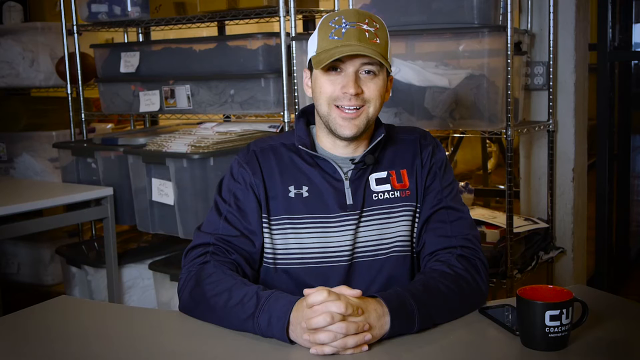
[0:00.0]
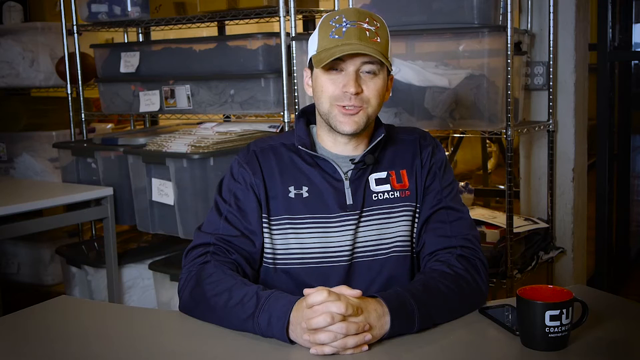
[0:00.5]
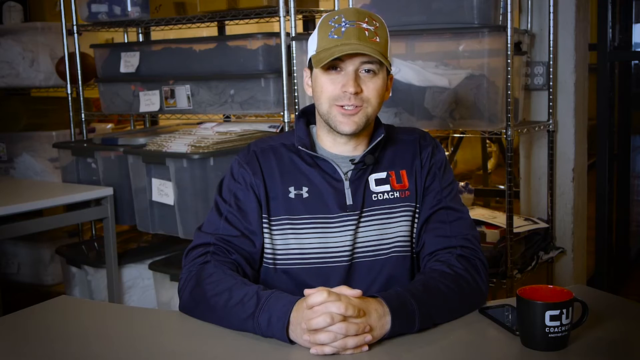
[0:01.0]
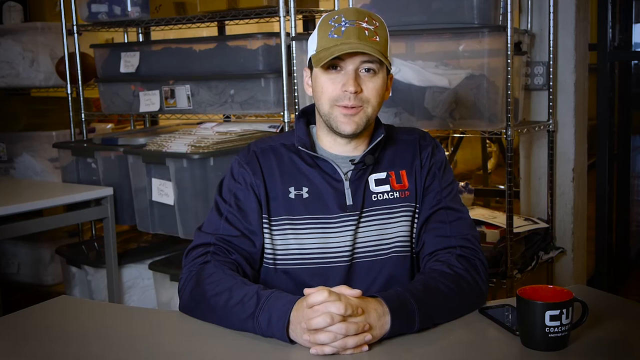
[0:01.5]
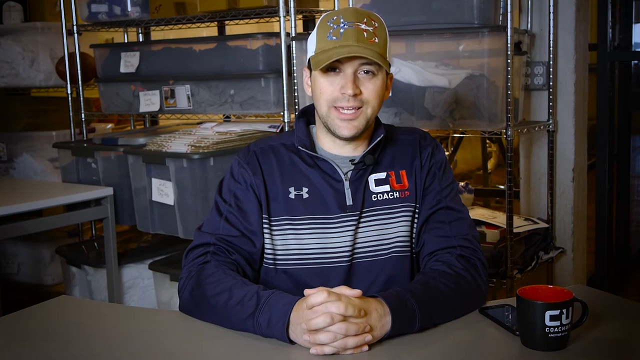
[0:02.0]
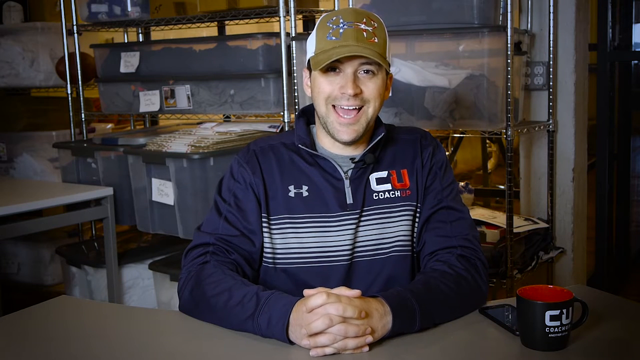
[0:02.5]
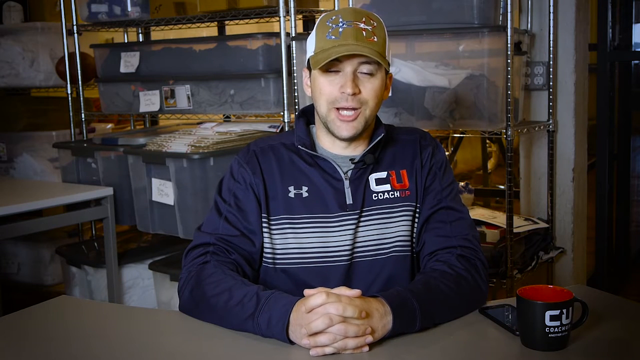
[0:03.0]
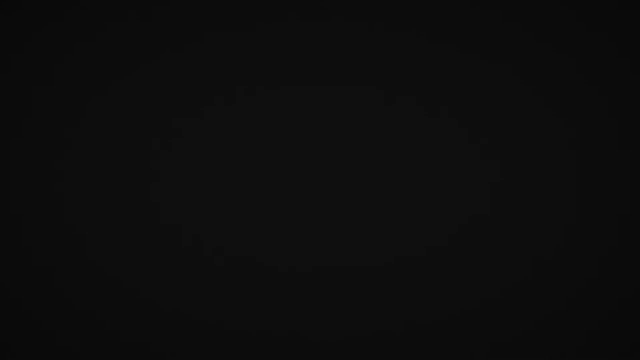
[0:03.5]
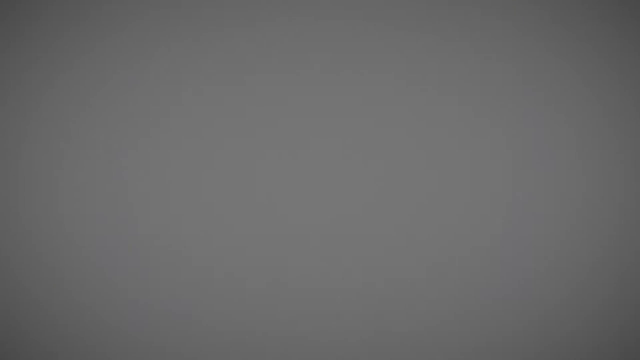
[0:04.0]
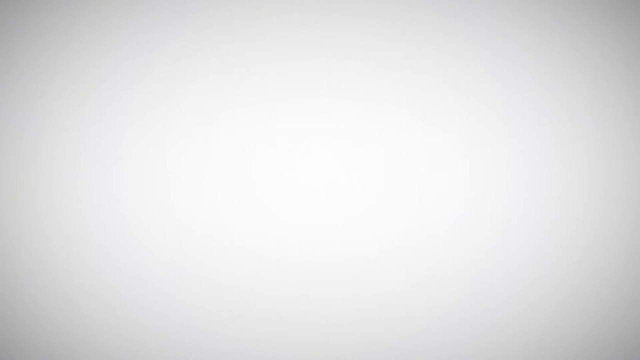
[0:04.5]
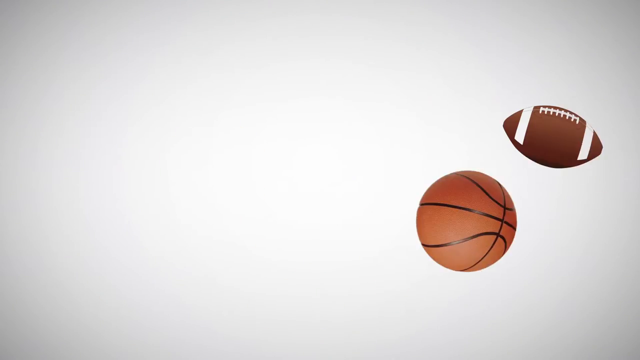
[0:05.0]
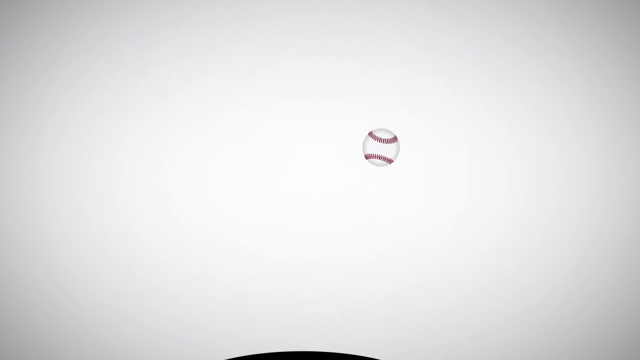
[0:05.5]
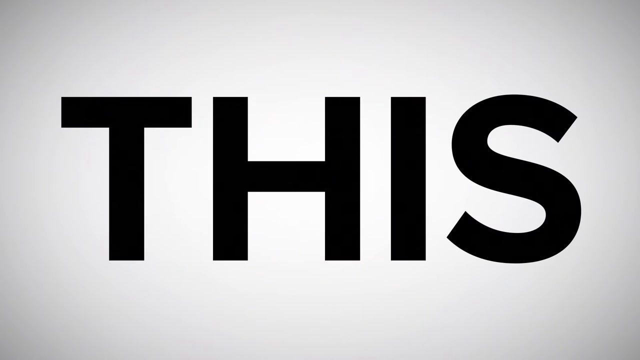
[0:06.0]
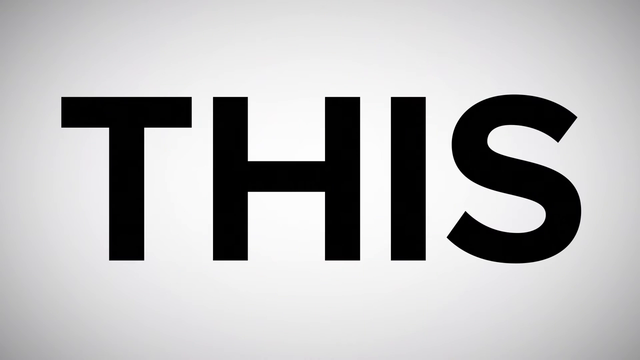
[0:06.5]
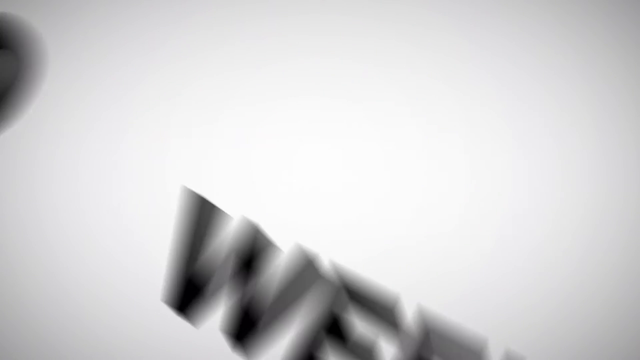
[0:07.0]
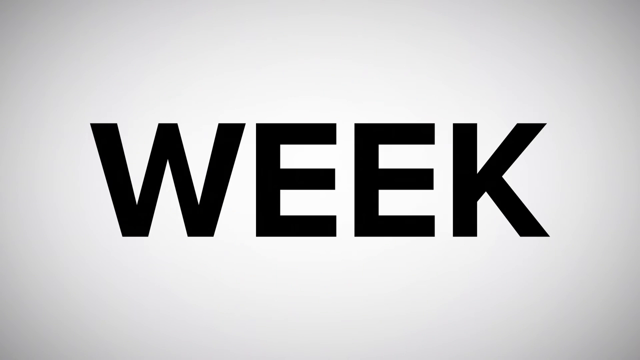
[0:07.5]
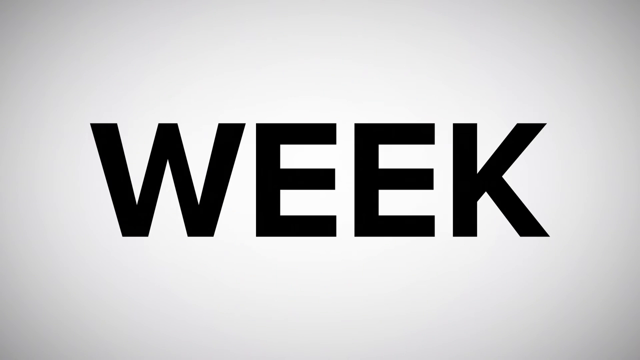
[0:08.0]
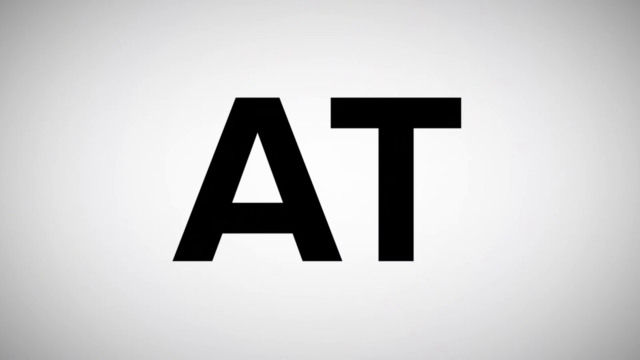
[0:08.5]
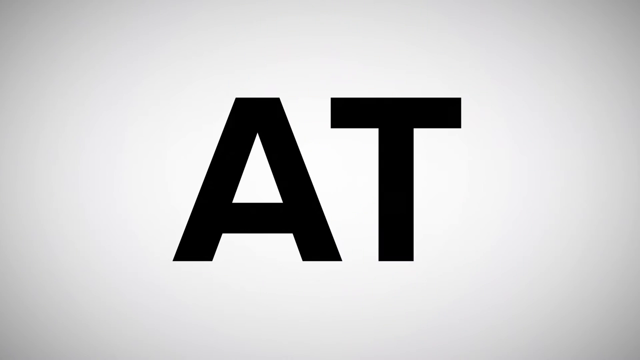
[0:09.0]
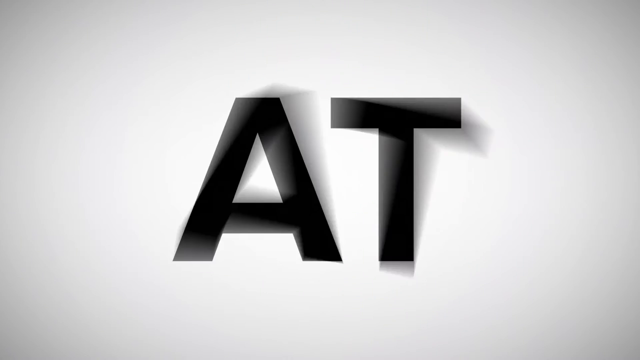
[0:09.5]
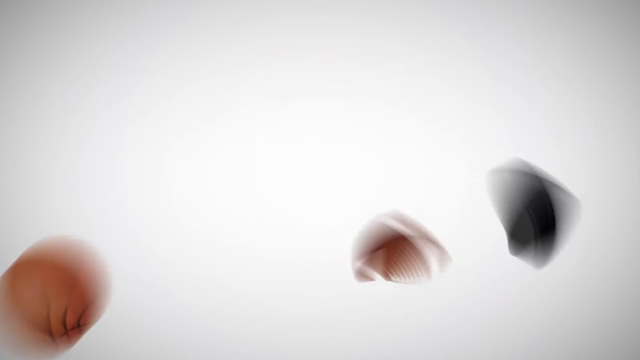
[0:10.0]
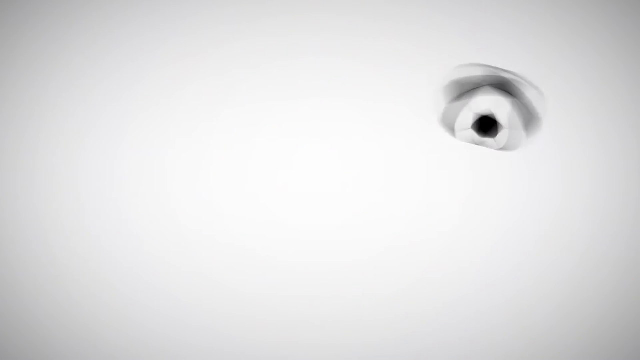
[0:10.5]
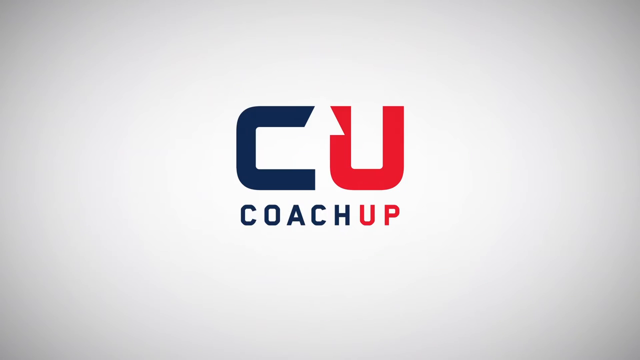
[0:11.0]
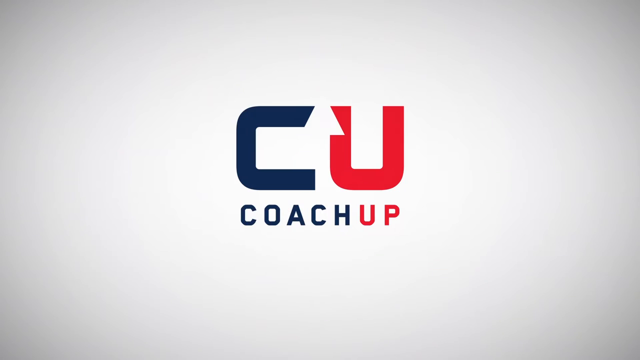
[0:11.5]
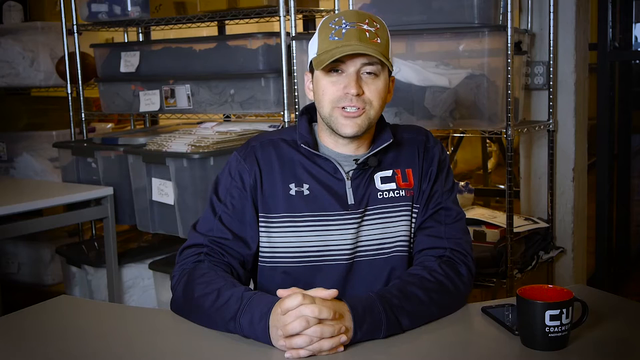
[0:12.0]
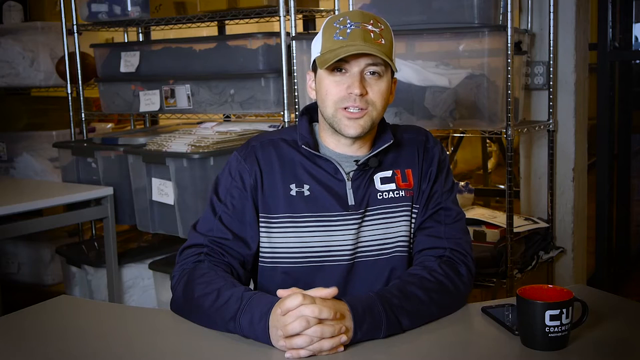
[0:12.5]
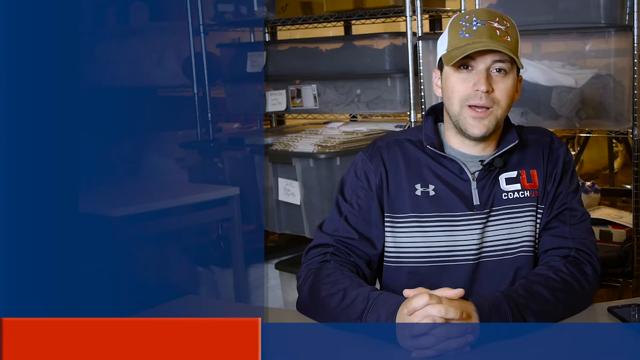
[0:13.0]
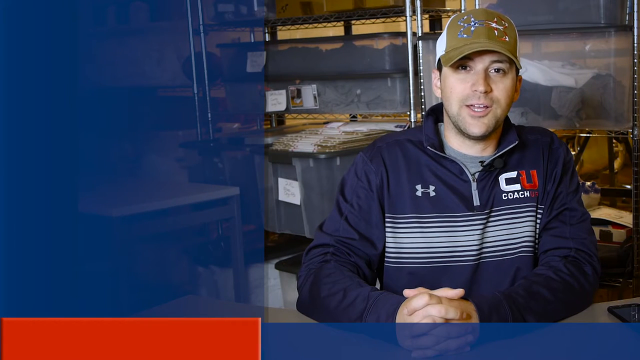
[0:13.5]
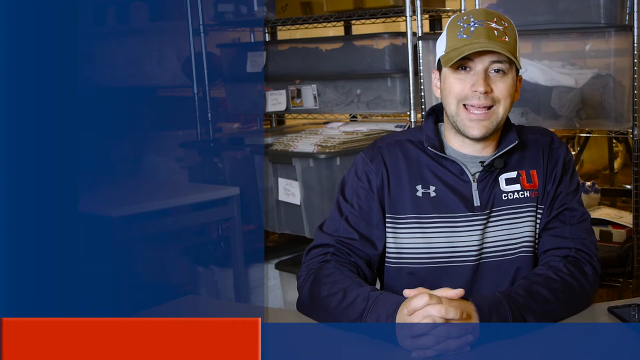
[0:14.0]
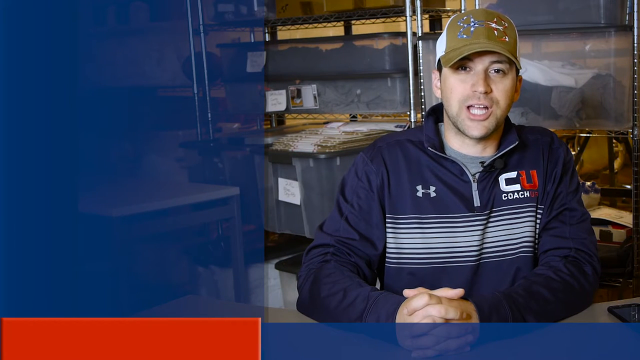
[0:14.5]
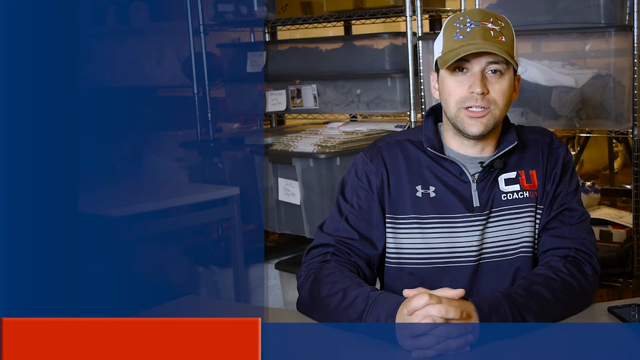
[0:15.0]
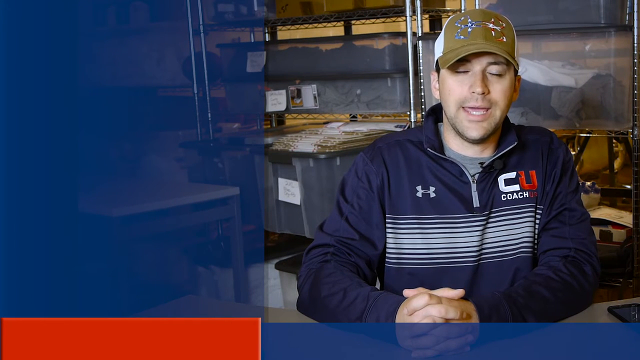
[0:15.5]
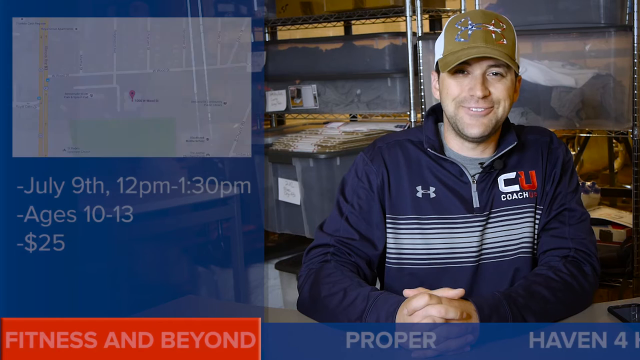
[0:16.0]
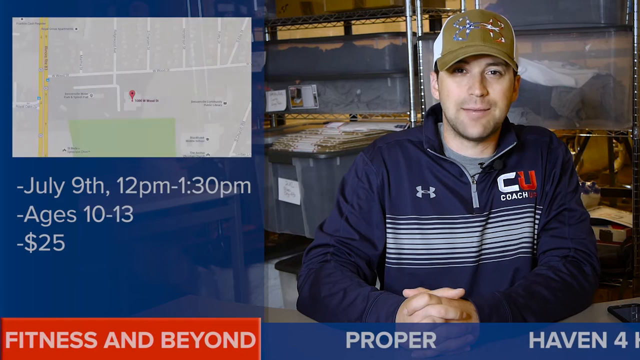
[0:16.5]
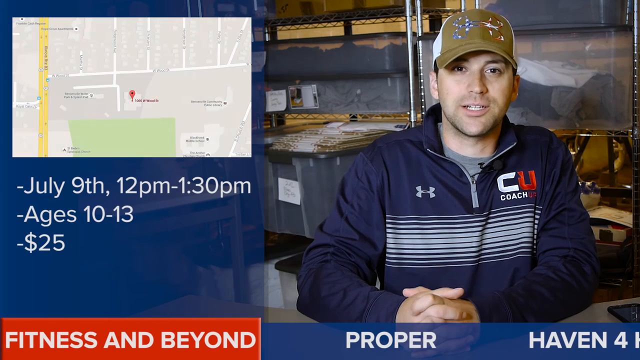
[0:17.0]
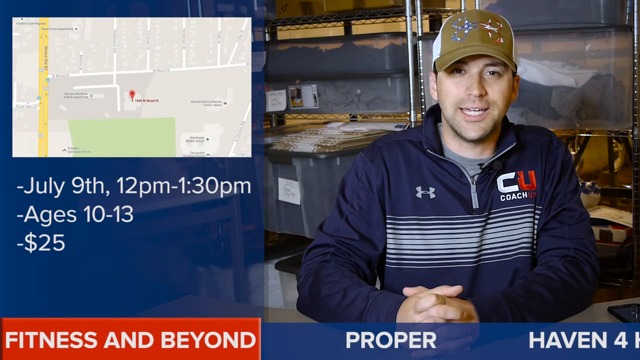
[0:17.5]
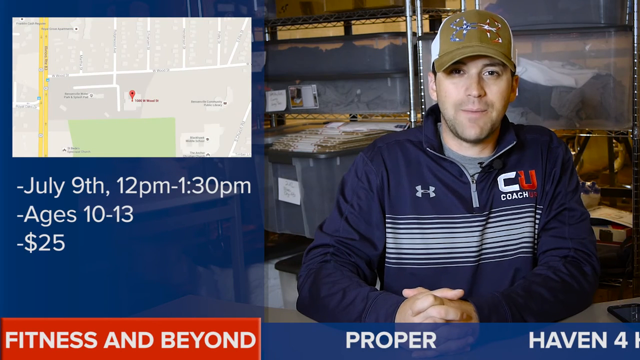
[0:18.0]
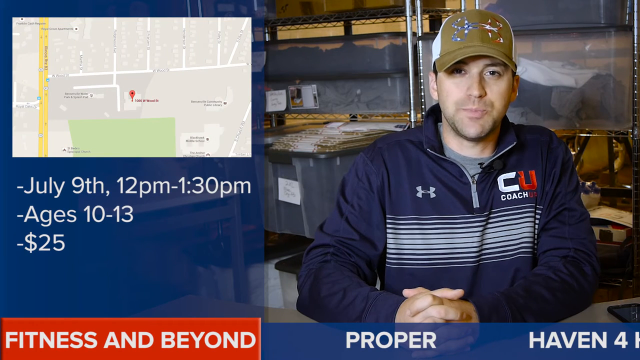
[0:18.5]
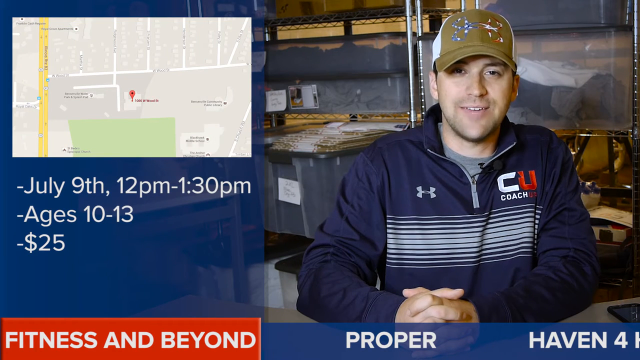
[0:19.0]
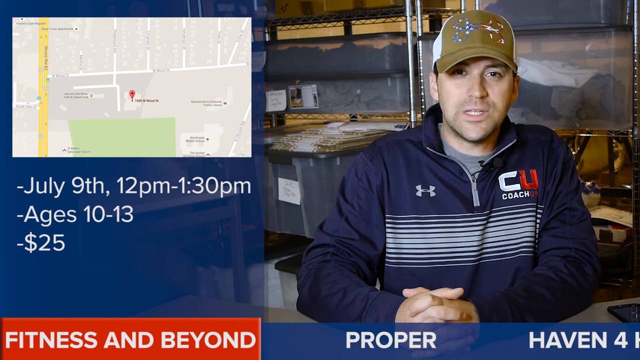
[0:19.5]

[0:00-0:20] A man talks on screen while sitting at a desk and facing the camera. He wears a blue sweatshirt and a hat that is tan on the front with some type of logo on it. The shot transitions to a screen where a basketball, a football and a baseball fly across, and the title "This Week at CU" appears. The man talks on screen again, with a map like a Google map on the left side of the screen showing a location, apparently his fitness place. Below the map the text reads "July 9th, 12 p.m. to 1.30 p.m., ages 10 to 13" and gives the cost as $25. The man is sitting at a desk in a garage area, filming himself.